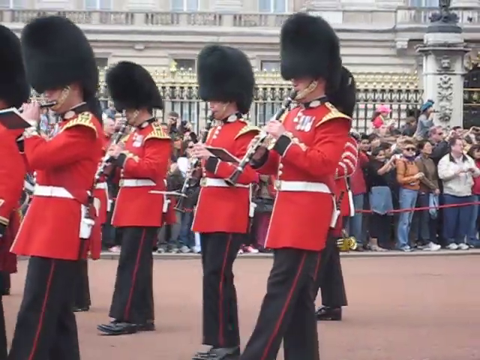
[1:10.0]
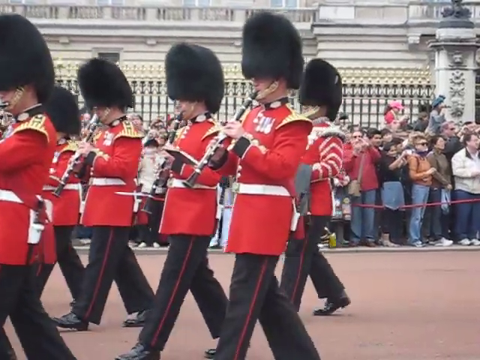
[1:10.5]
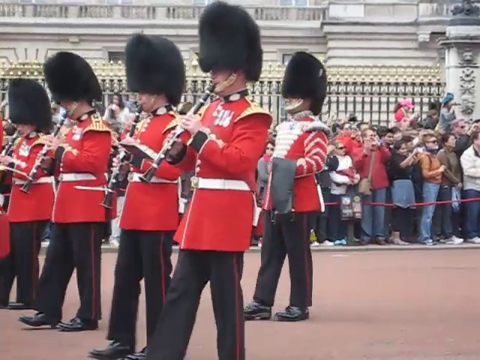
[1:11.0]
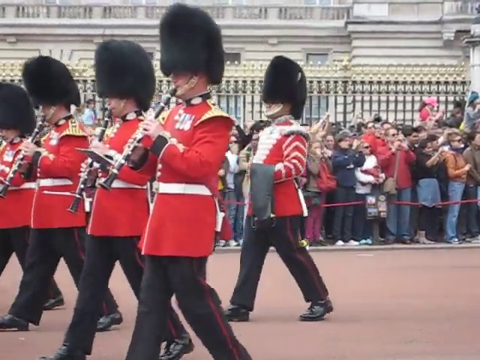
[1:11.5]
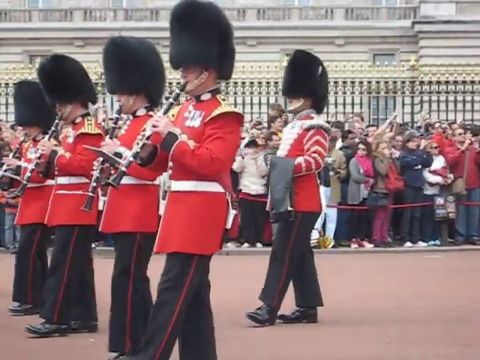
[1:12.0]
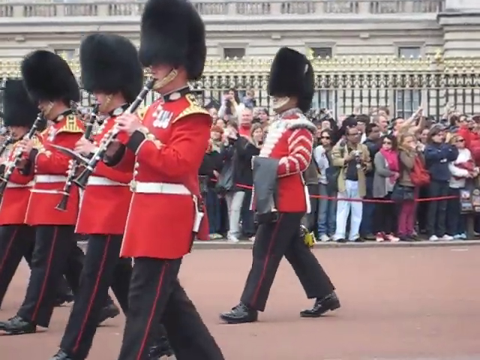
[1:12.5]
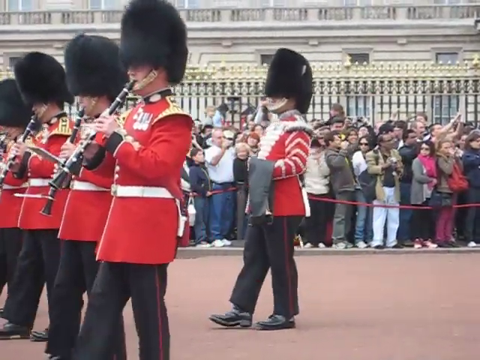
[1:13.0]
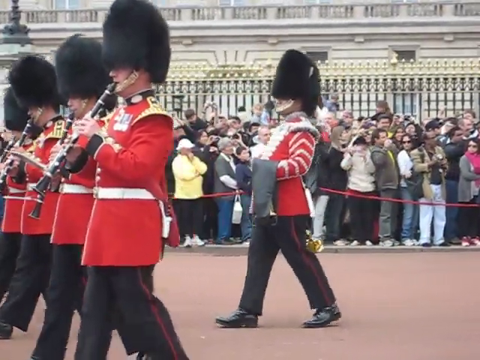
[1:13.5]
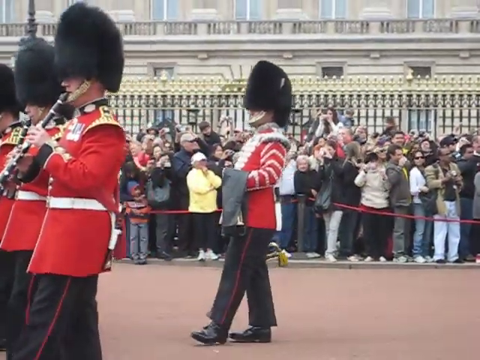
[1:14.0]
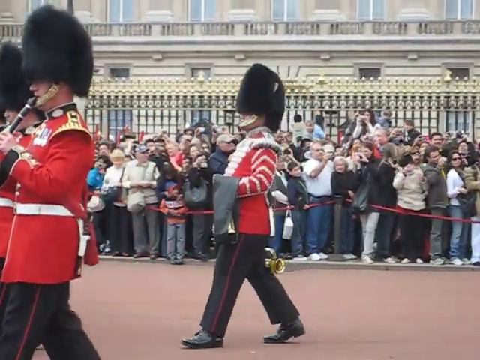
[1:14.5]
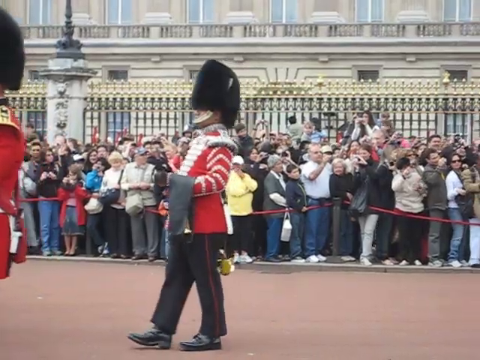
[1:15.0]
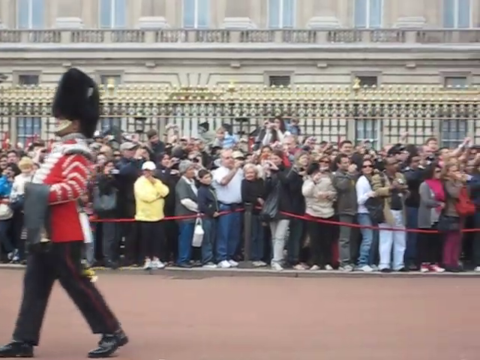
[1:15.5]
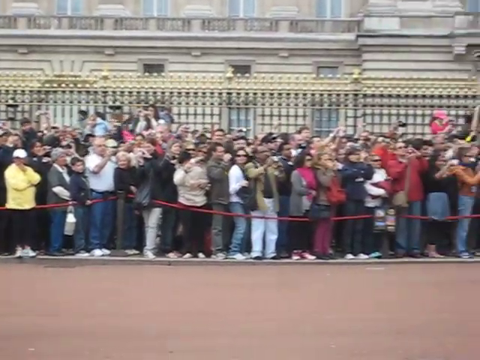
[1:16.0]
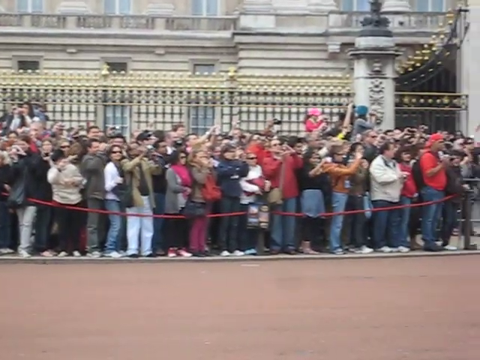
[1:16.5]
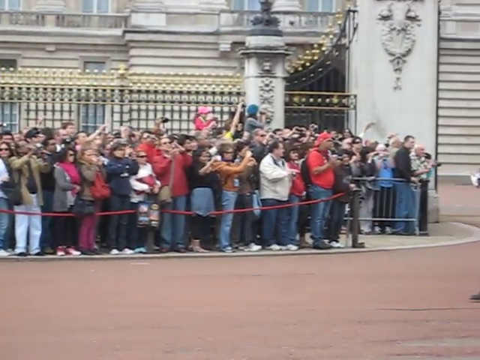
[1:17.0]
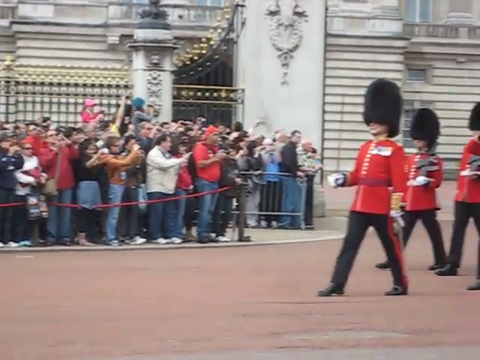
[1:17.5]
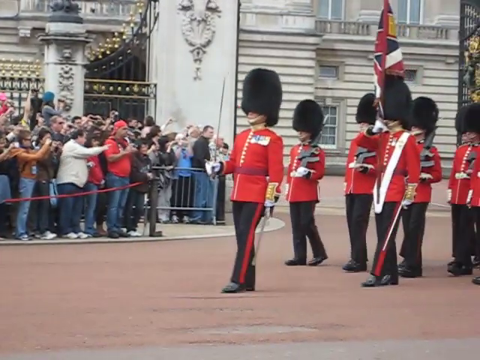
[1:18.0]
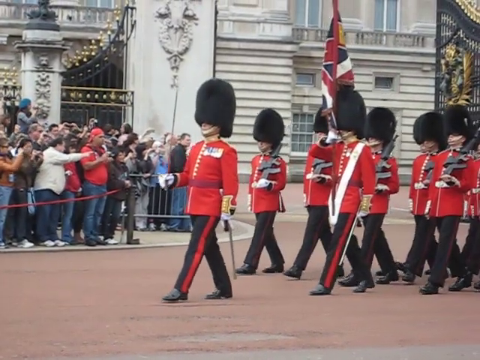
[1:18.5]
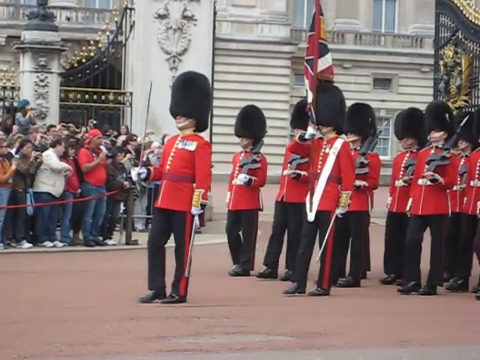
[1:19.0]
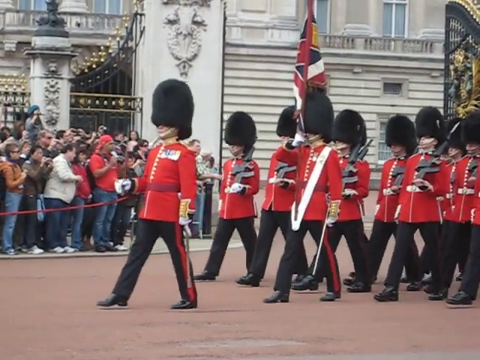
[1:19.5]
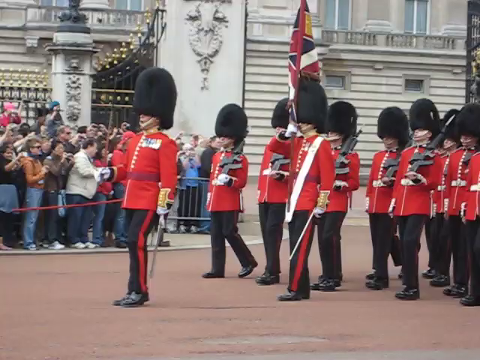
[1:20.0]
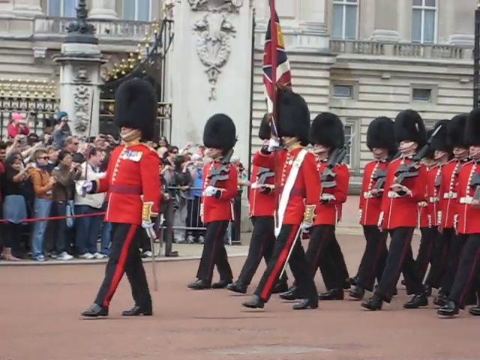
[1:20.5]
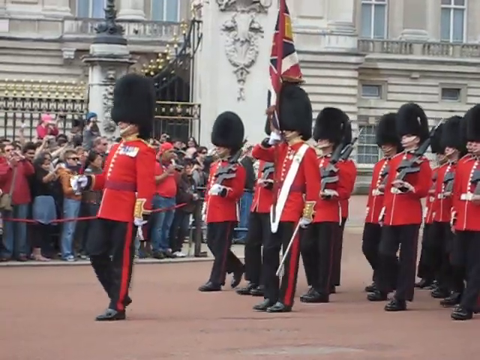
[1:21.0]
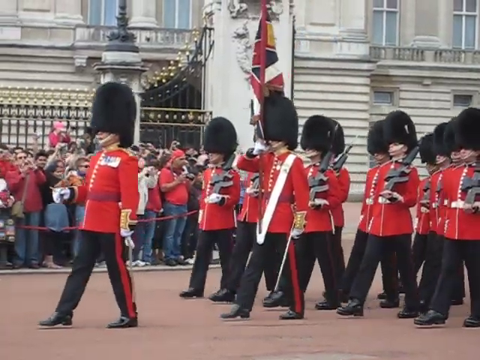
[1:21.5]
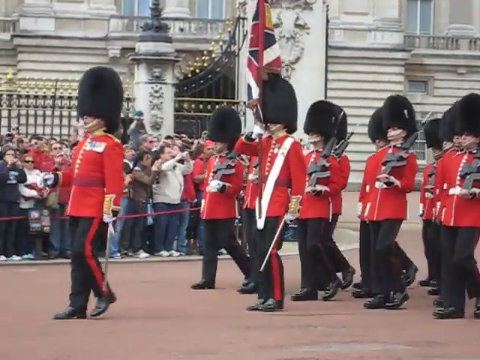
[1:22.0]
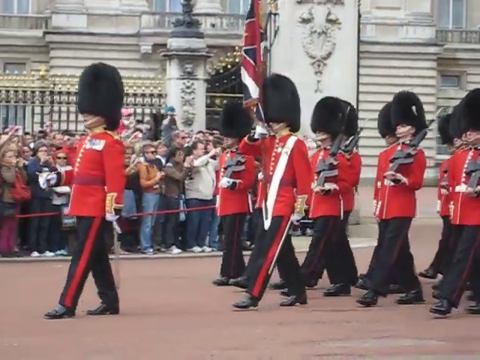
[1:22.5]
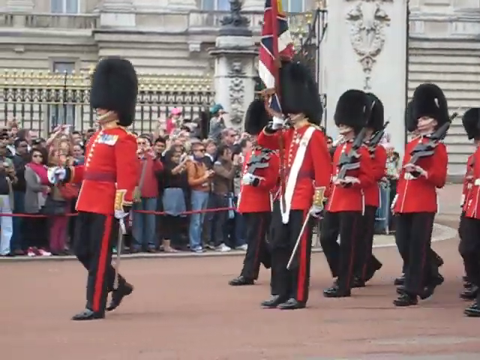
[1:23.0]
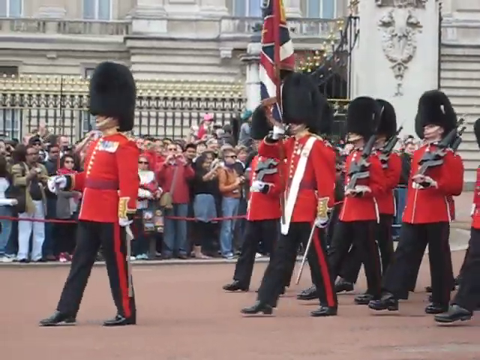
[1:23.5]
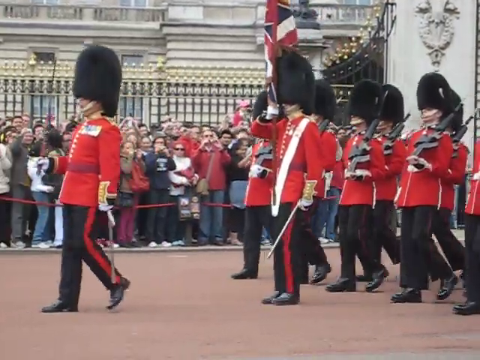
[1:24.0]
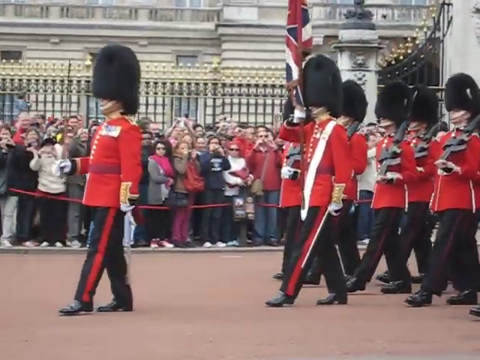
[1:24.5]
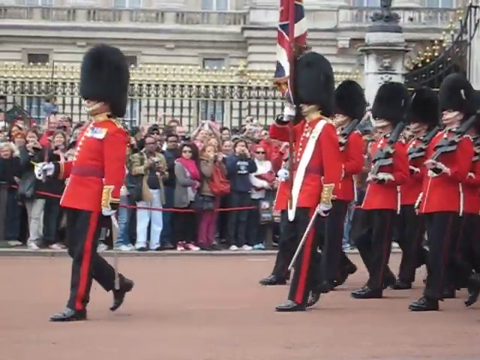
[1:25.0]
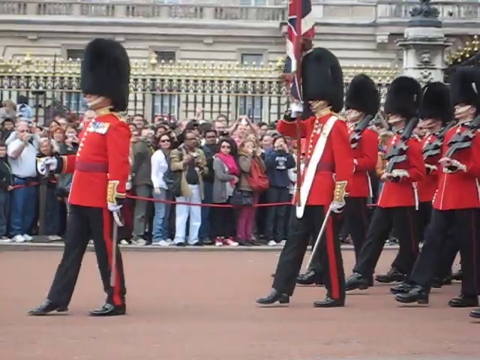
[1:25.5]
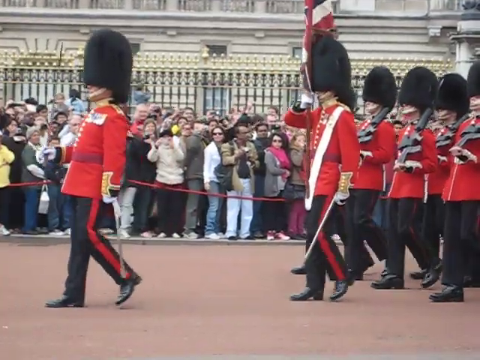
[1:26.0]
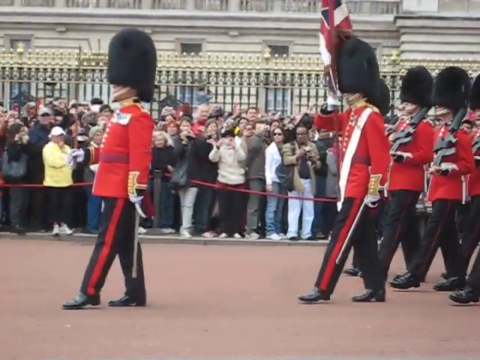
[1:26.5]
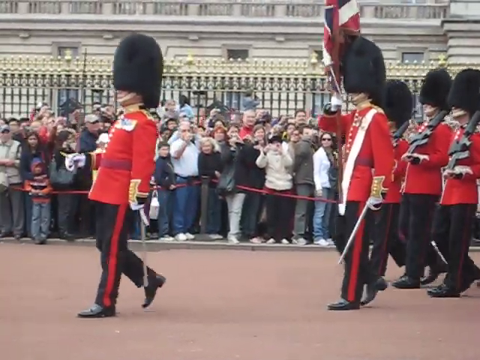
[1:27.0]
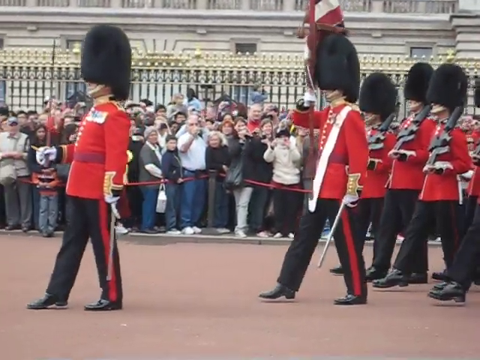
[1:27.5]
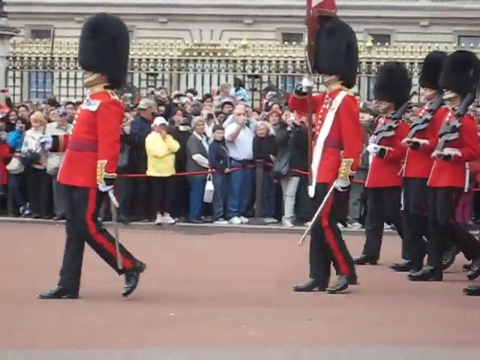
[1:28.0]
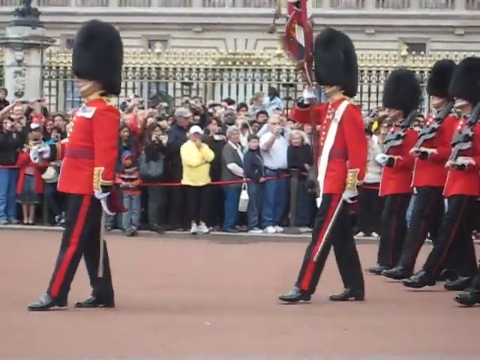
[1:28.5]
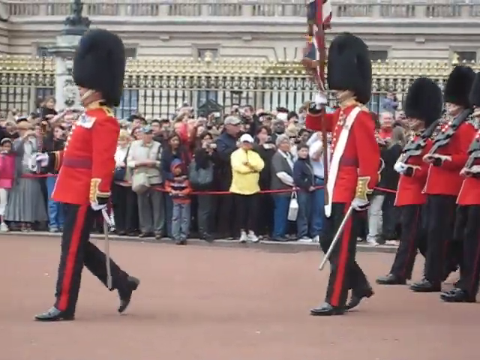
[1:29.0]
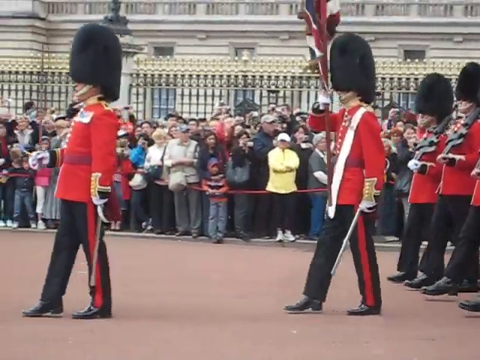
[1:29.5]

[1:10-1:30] The tail end of the Queen's Guard marching band is passing. A portion of Buckingham Palace is in the background, with a tall ornate metal gate fence in front of it. Lined against this fence and standing on the sidewalk is a very large group of about a hundred or more tourists grouped together, watching the marching band pass by on the road. For a few moments no guard members are in view, and then a second group of the Queen's Guard begins to pass by. This group is holding weapons. The person leading it holds a sword out straight in his hand, pointing up towards the sky. Behind him, another guard member carries a flag. All of the other members behind these two hold rifles out in front of them, with the rifles leaning against their shoulders.